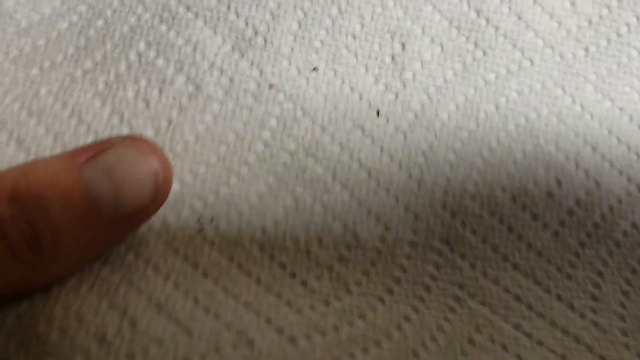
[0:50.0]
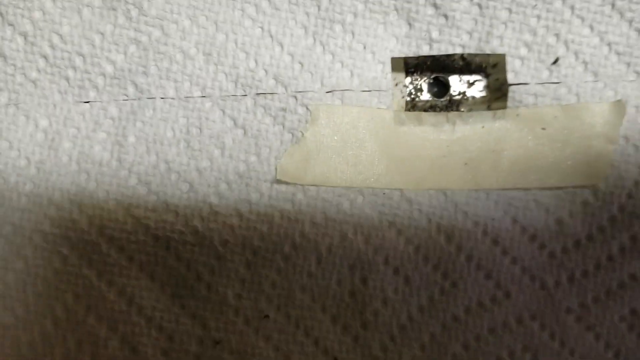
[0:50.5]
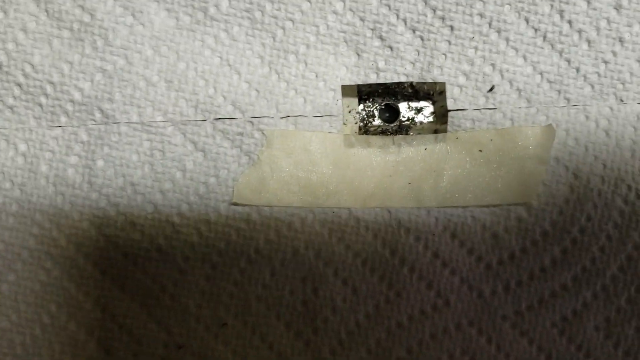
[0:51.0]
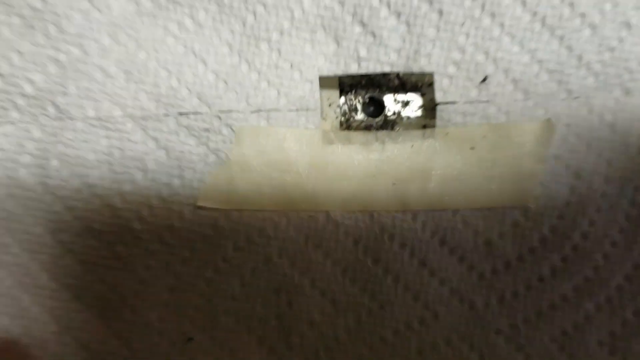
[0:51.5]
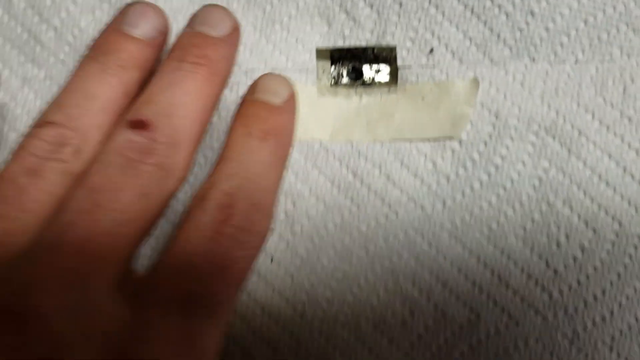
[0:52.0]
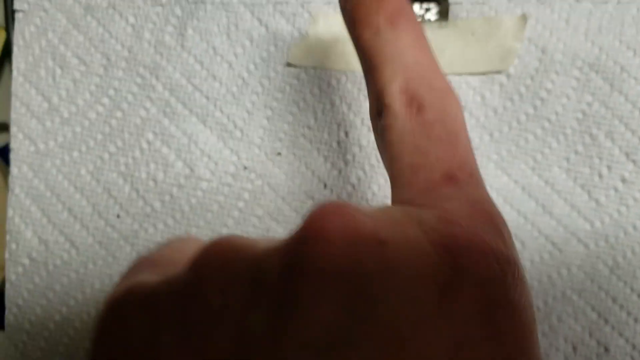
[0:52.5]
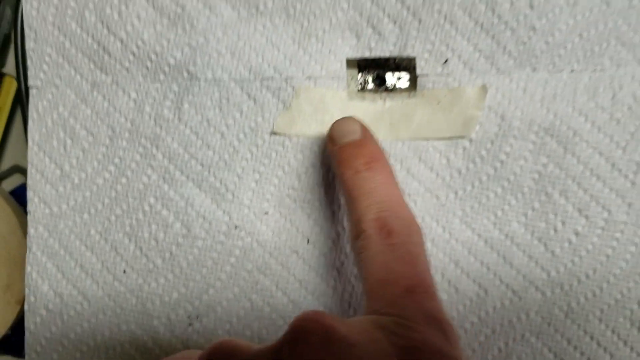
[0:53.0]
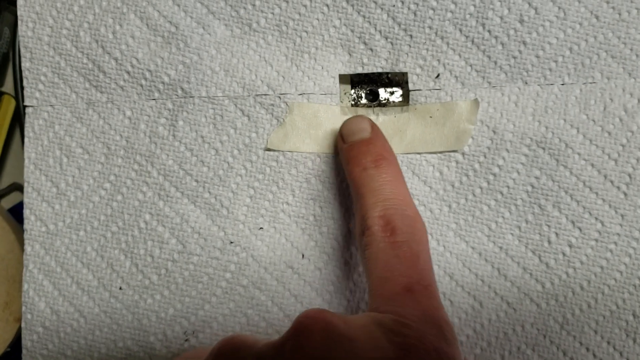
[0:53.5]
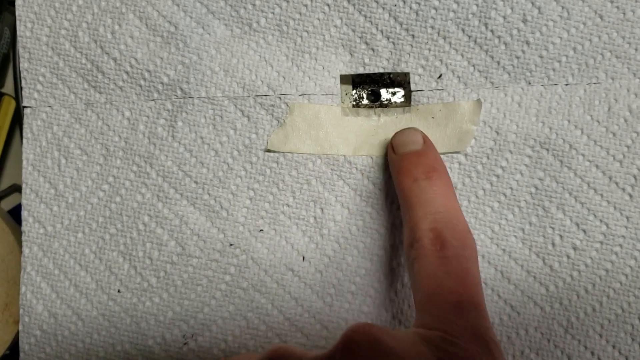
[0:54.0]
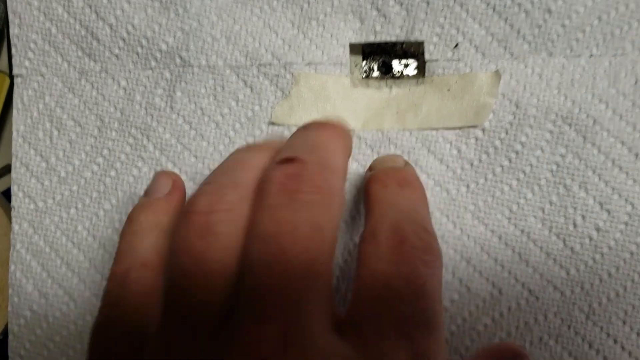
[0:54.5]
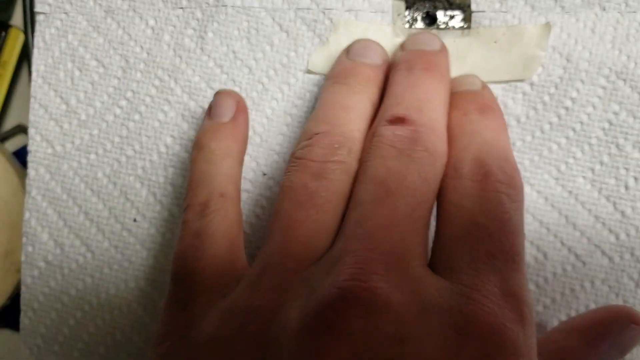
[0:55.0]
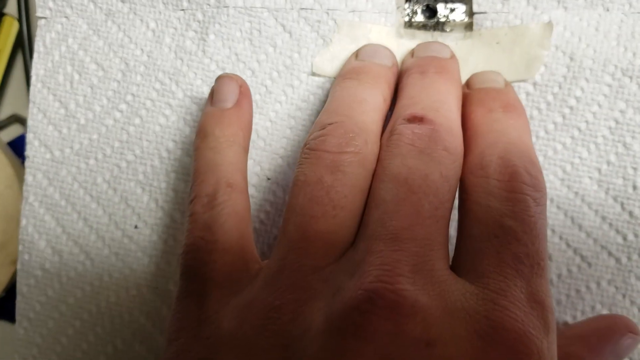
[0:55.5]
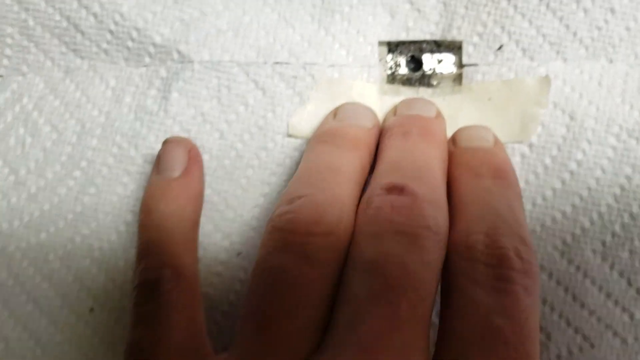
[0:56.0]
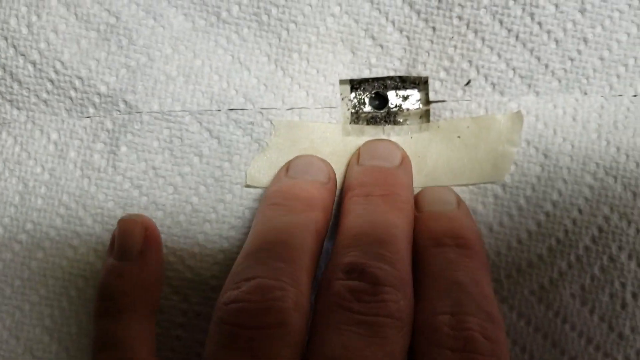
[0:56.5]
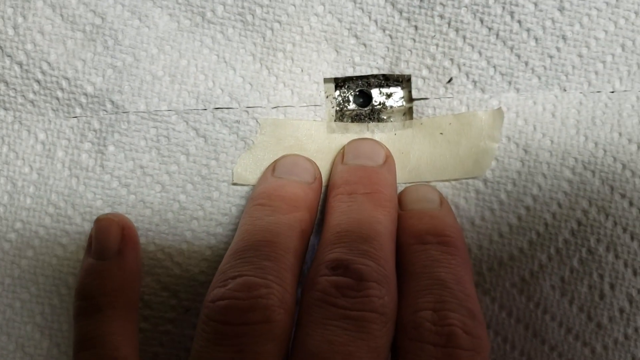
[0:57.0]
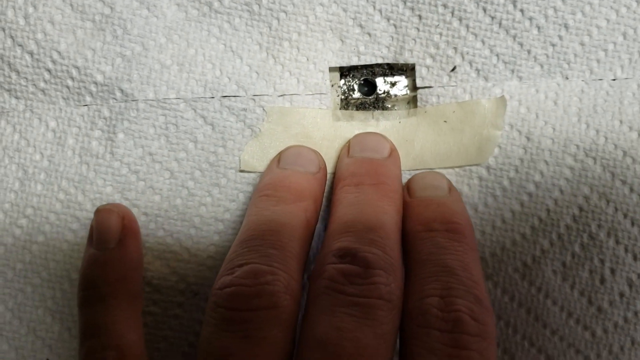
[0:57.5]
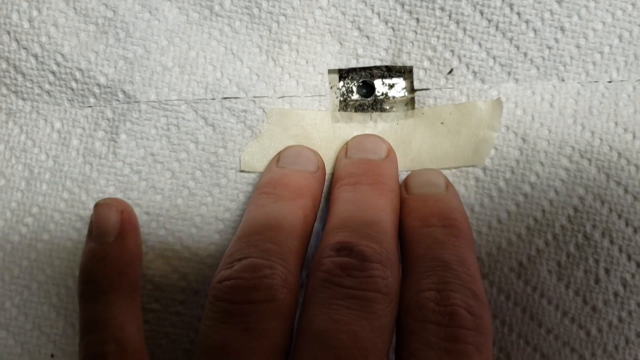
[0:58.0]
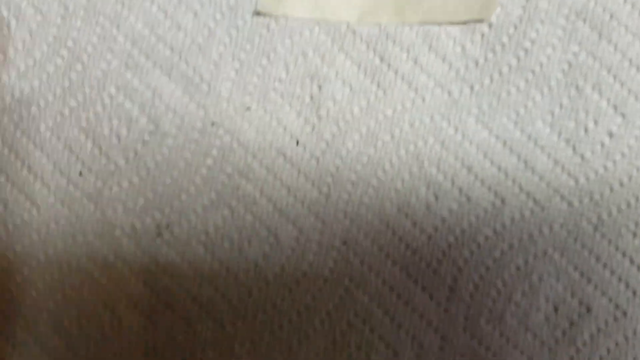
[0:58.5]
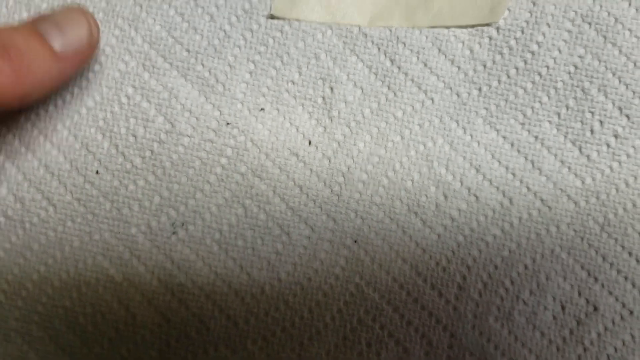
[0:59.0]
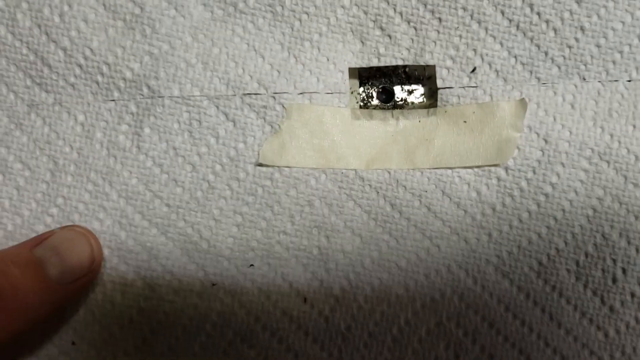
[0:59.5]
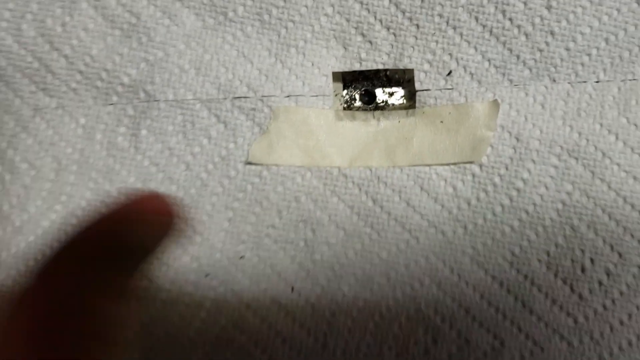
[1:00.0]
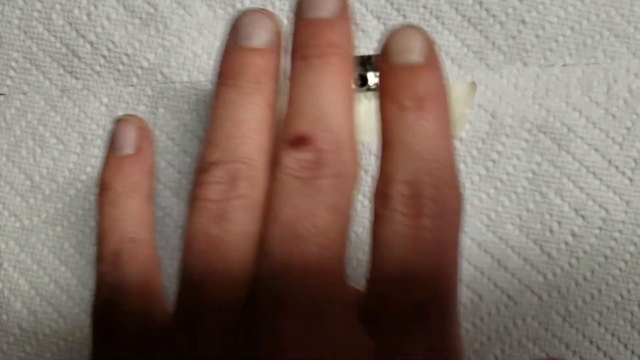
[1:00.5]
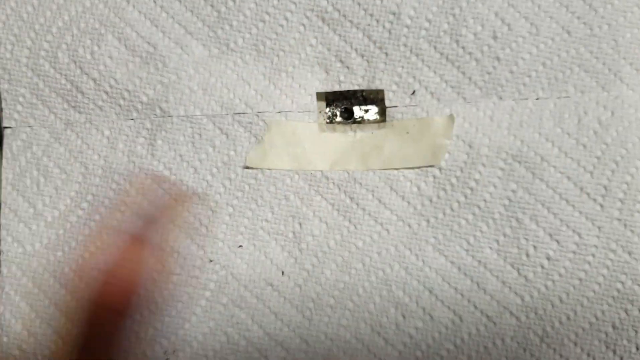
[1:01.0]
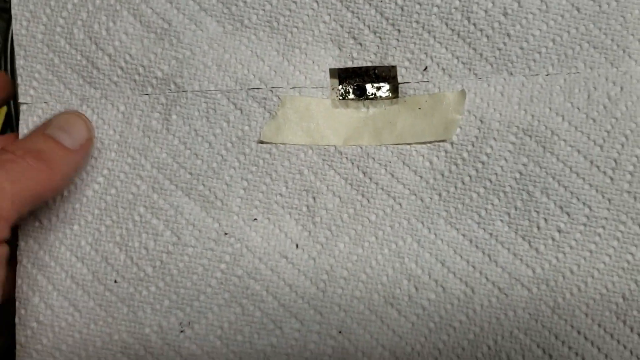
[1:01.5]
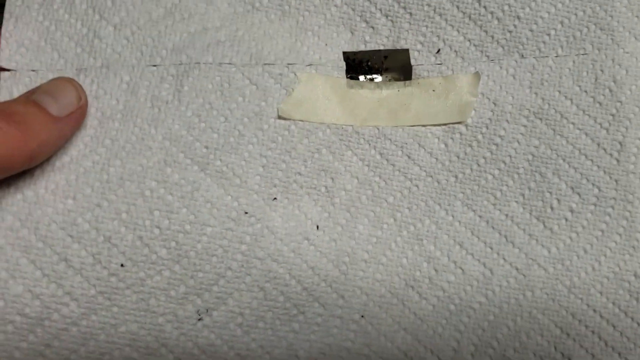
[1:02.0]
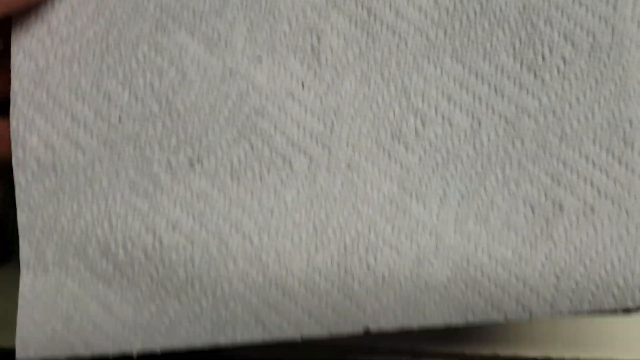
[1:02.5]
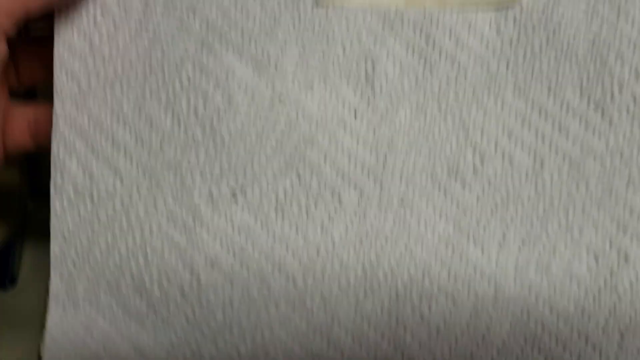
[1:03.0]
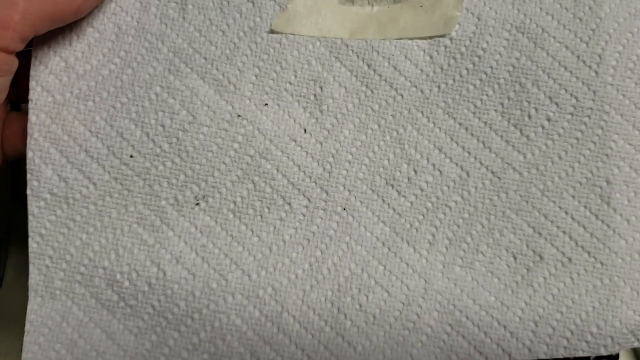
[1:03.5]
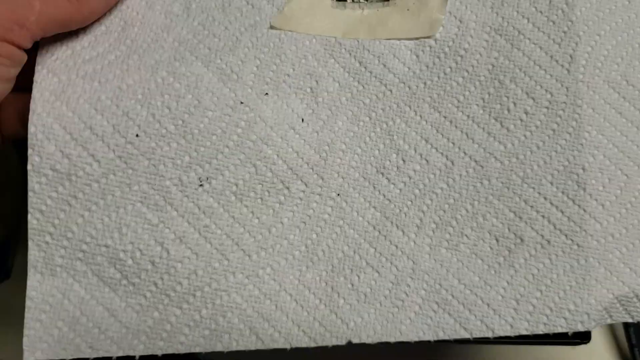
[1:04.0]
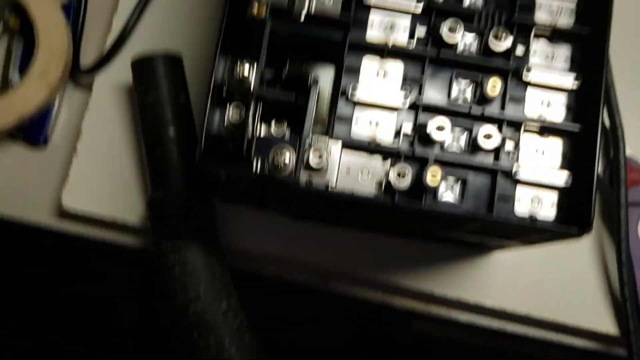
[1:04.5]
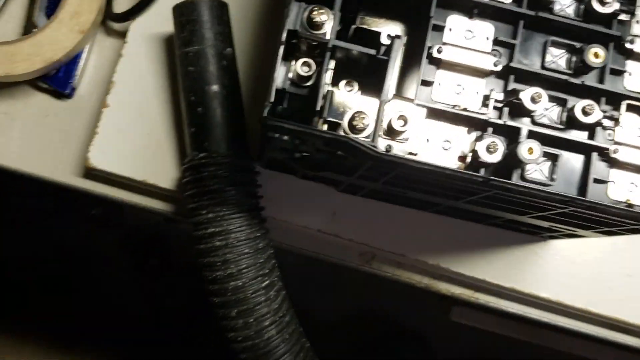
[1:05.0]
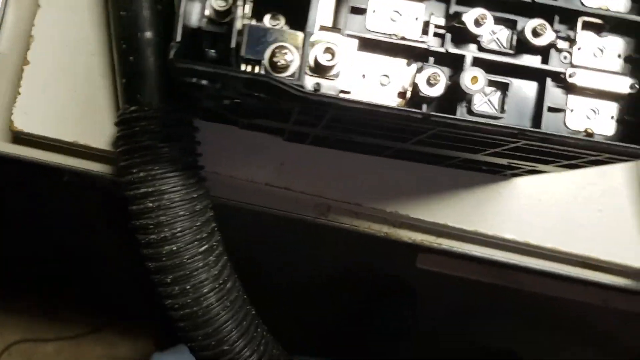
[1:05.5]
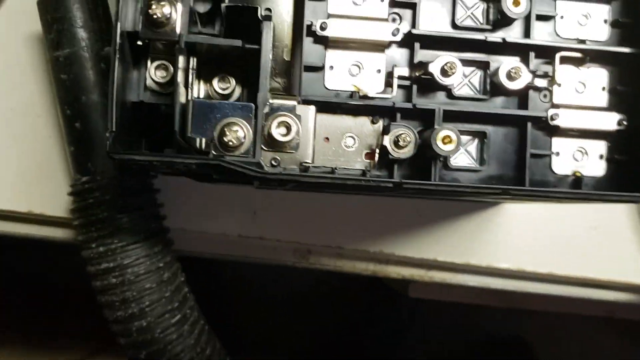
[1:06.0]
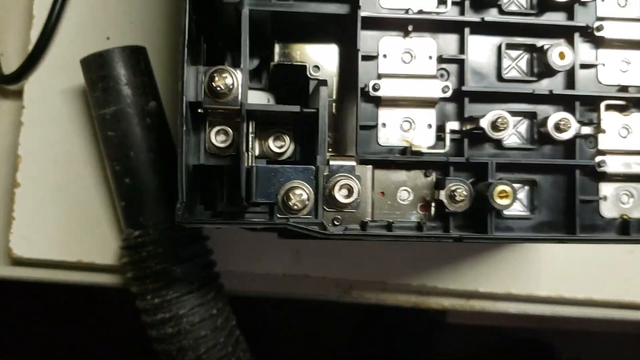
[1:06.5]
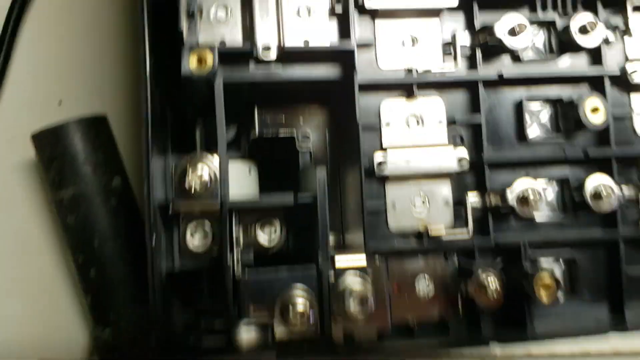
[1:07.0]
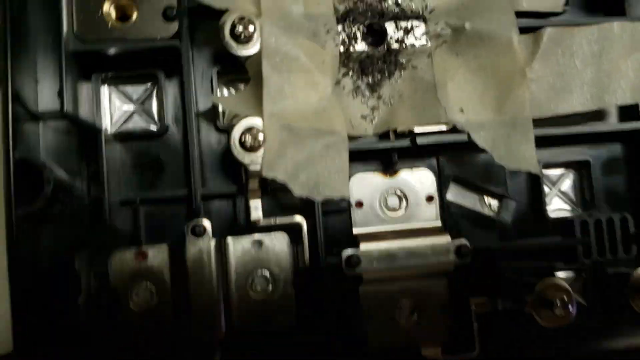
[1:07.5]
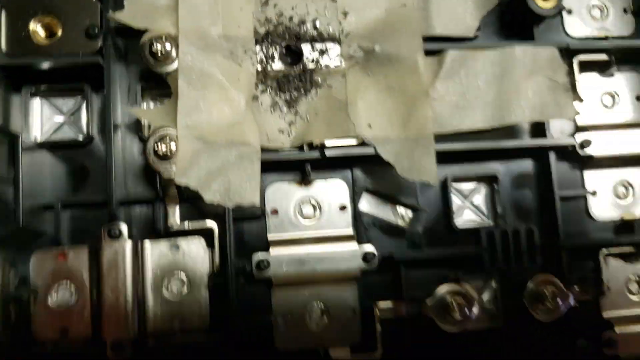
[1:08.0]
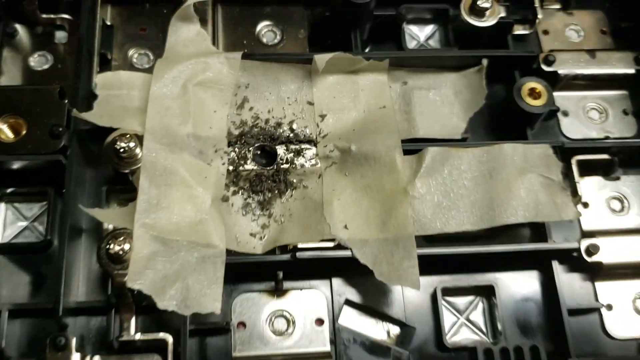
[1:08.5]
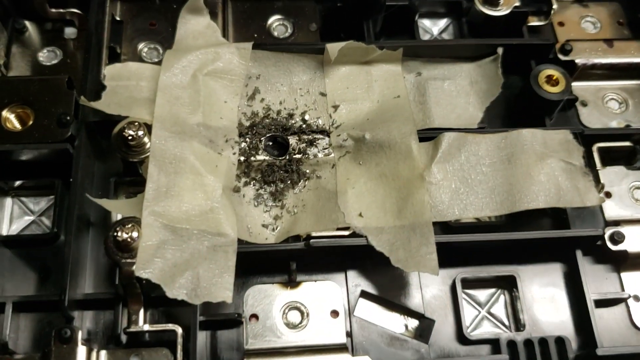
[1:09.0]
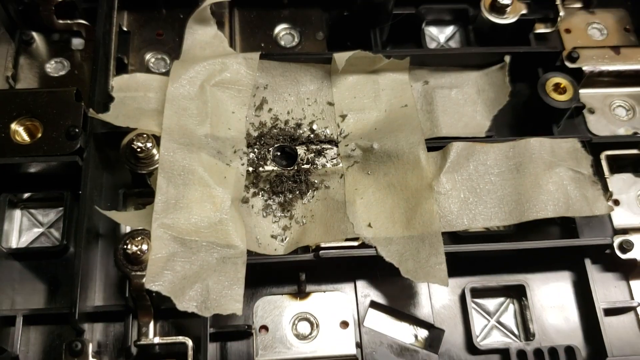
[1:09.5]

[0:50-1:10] What is under the taped-up paper is shown, but it is really difficult to see what it is. The tape appears to be used to fix or alter the machinery in some way, and there is a bit that looks like it was drilled, possibly a hole. Hardly any background is shown; the shot is pretty much a close-up of the second main item the person pointed to, which looks like a slightly smaller version of the first.